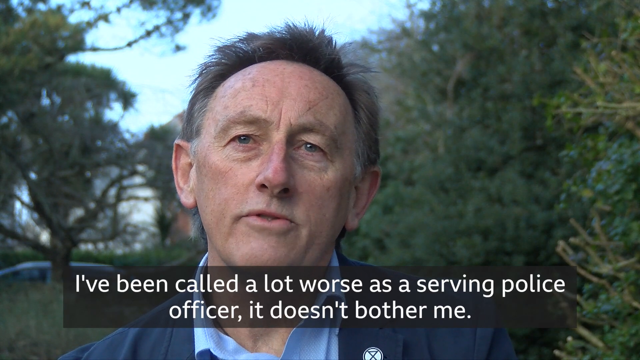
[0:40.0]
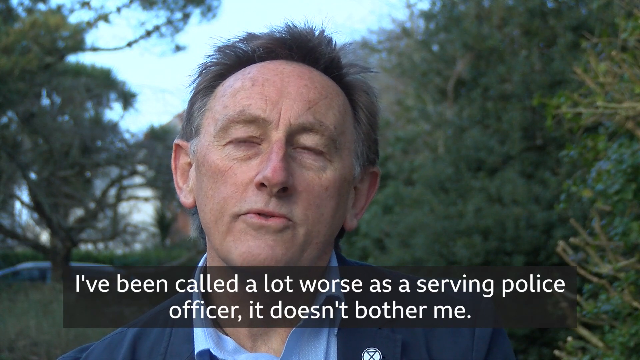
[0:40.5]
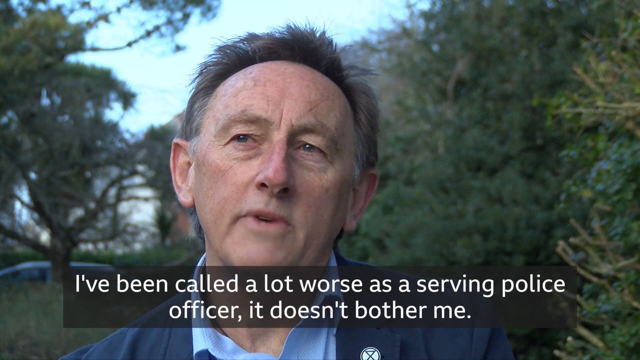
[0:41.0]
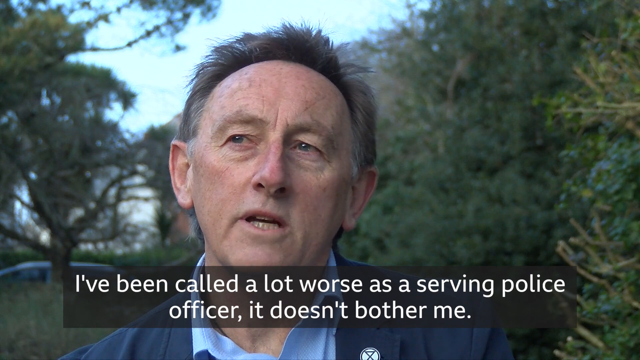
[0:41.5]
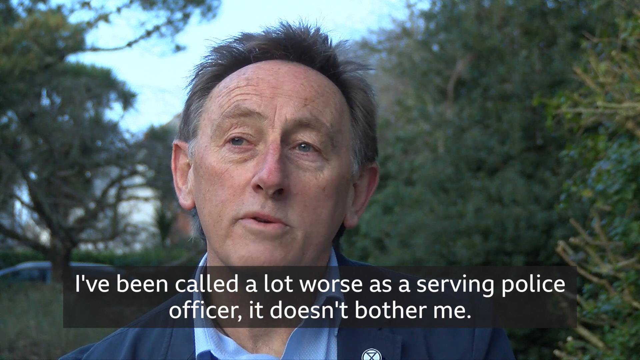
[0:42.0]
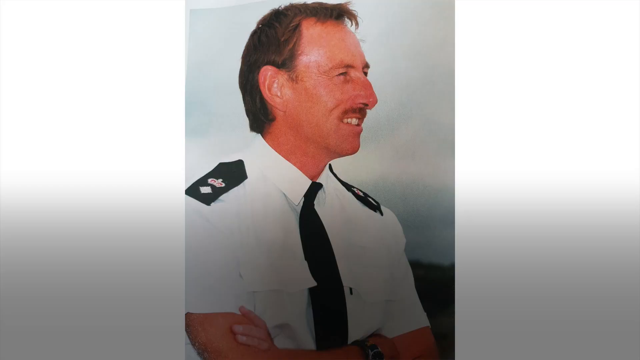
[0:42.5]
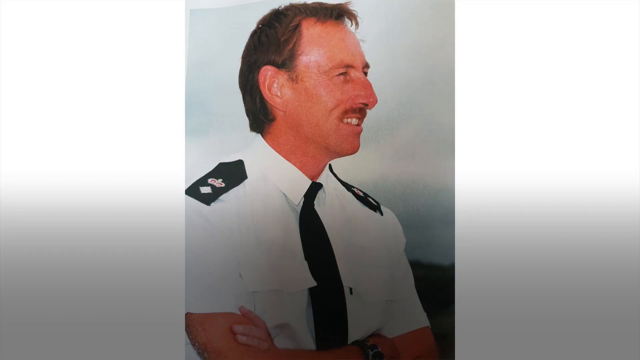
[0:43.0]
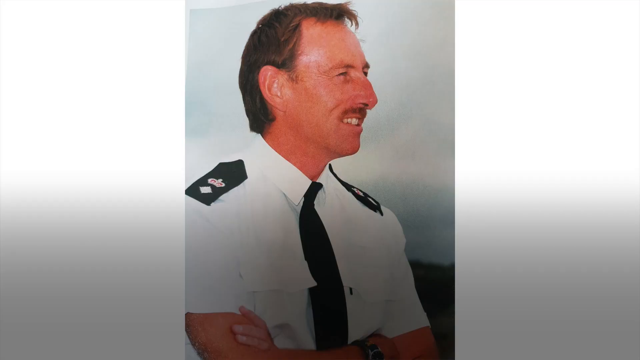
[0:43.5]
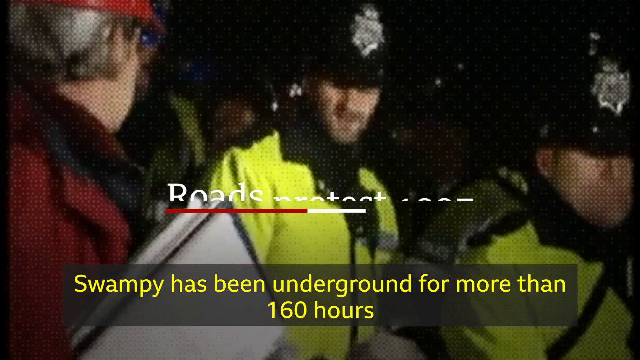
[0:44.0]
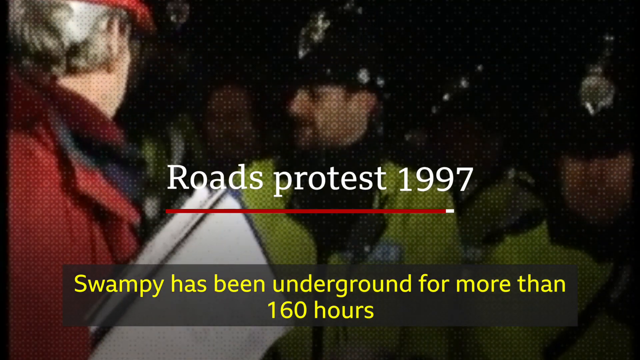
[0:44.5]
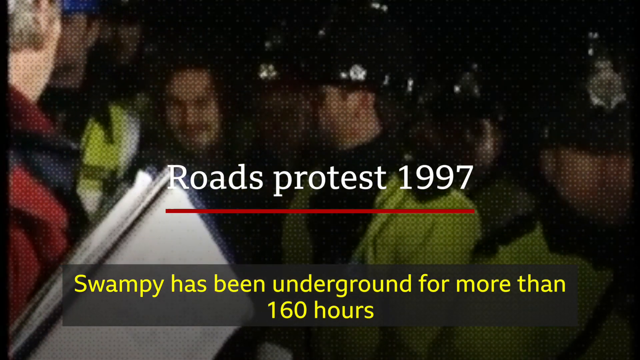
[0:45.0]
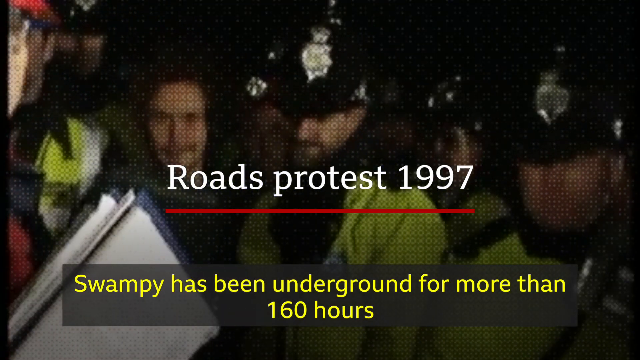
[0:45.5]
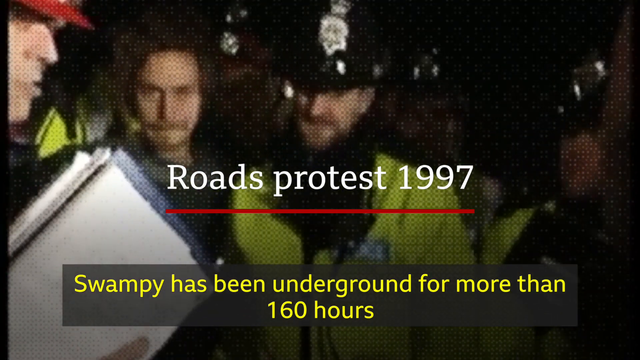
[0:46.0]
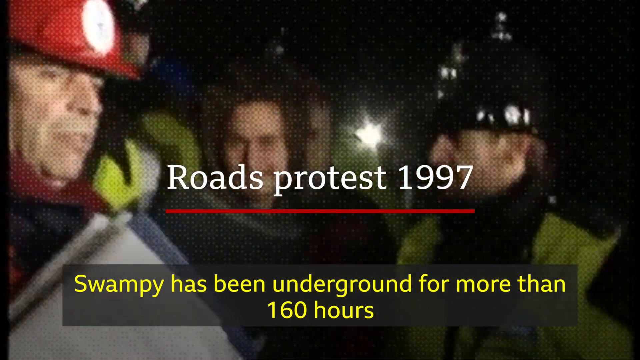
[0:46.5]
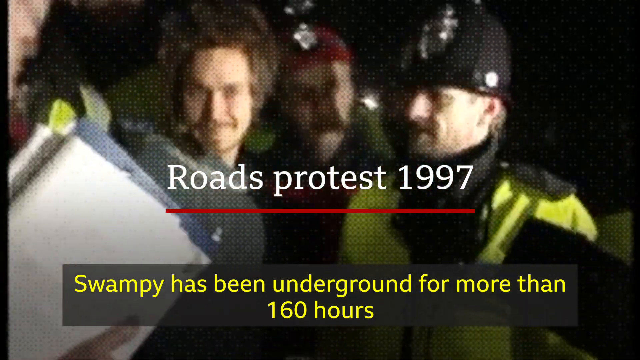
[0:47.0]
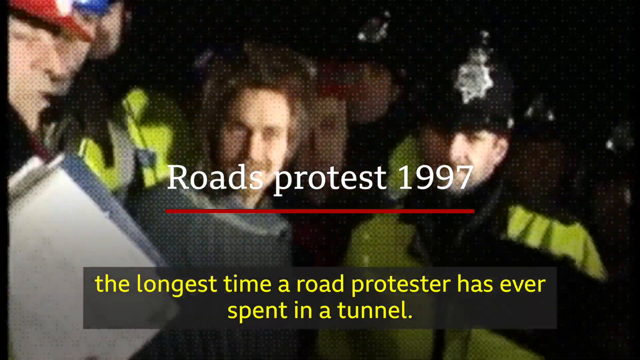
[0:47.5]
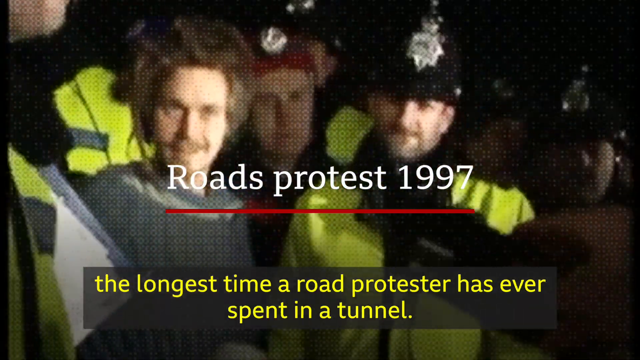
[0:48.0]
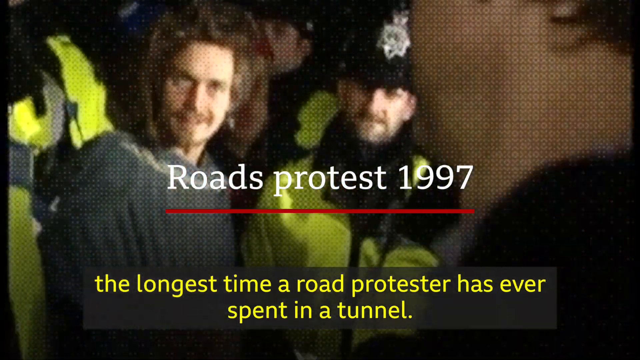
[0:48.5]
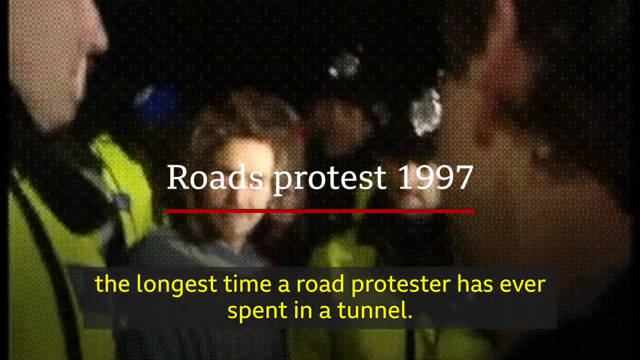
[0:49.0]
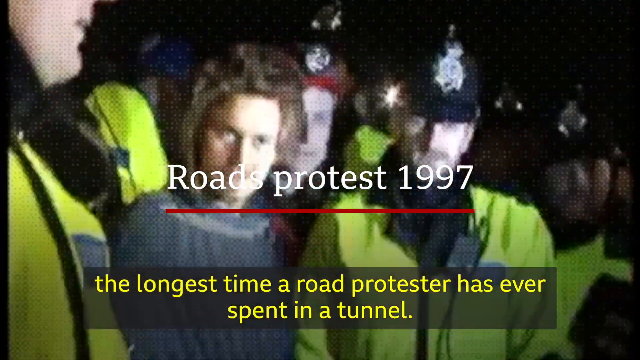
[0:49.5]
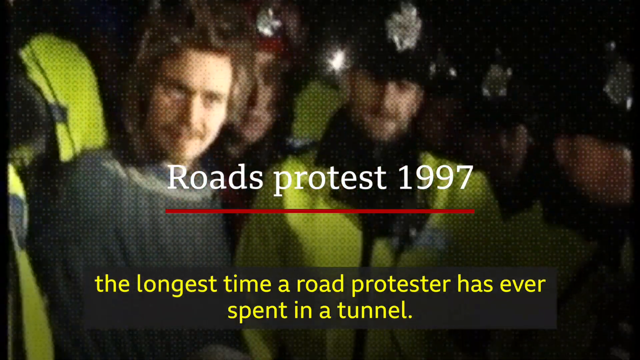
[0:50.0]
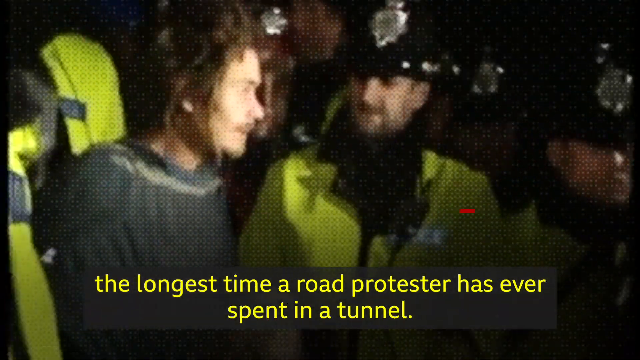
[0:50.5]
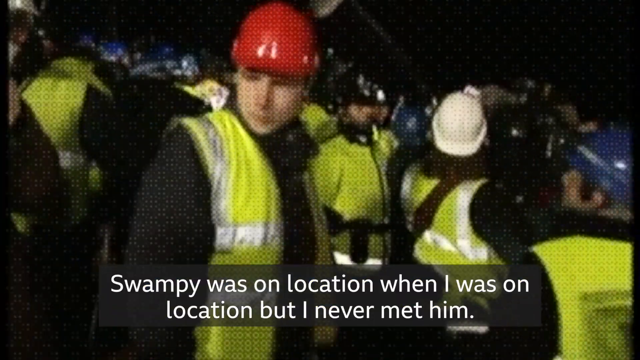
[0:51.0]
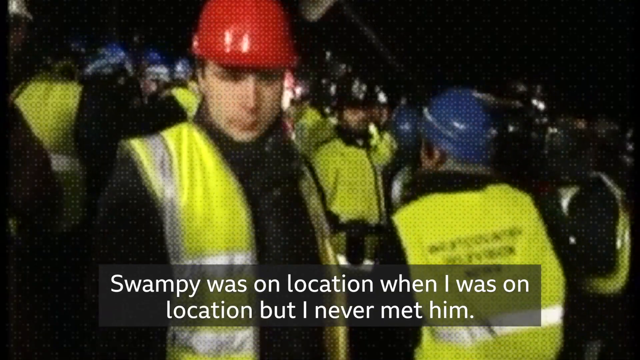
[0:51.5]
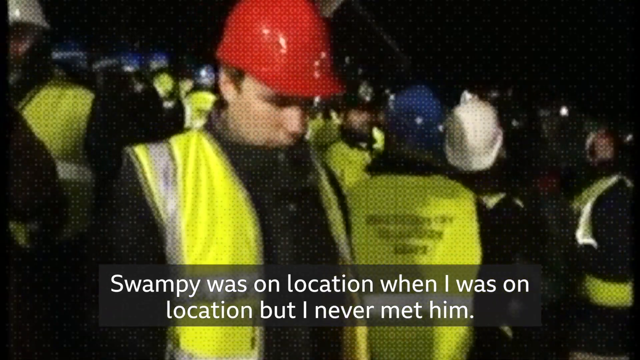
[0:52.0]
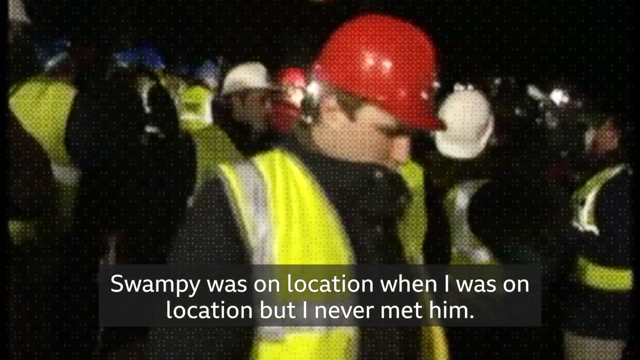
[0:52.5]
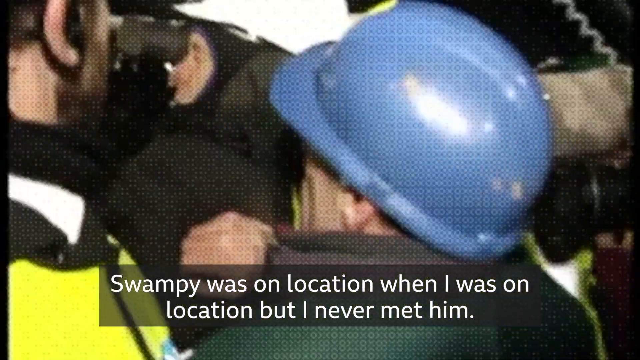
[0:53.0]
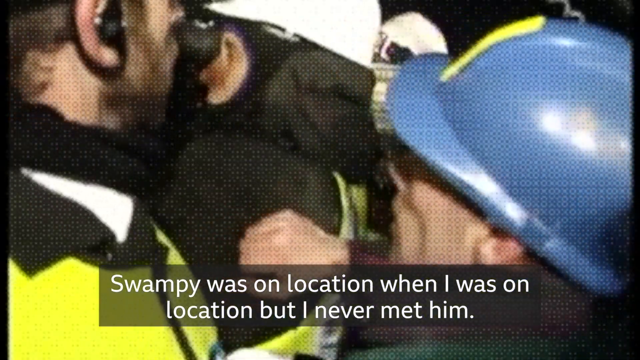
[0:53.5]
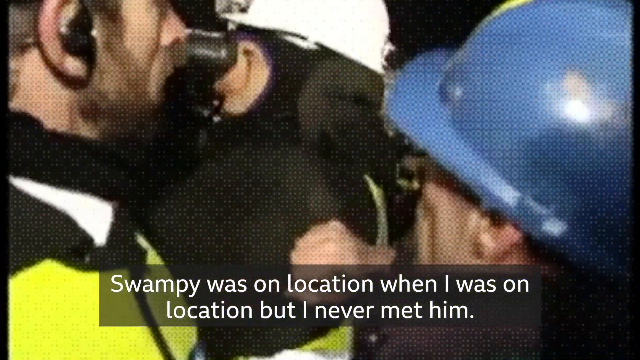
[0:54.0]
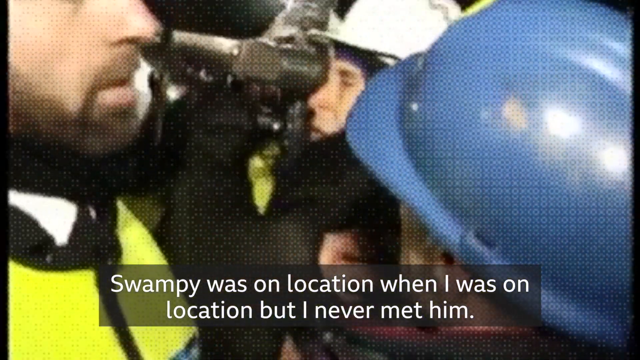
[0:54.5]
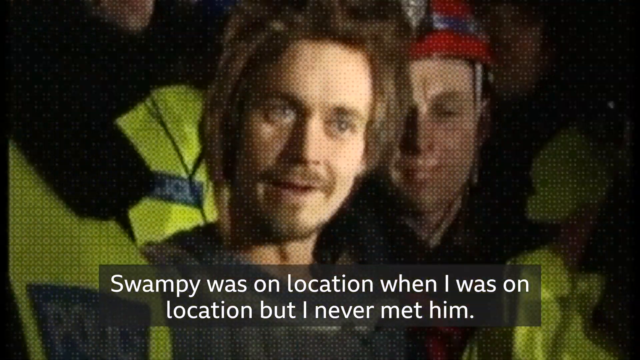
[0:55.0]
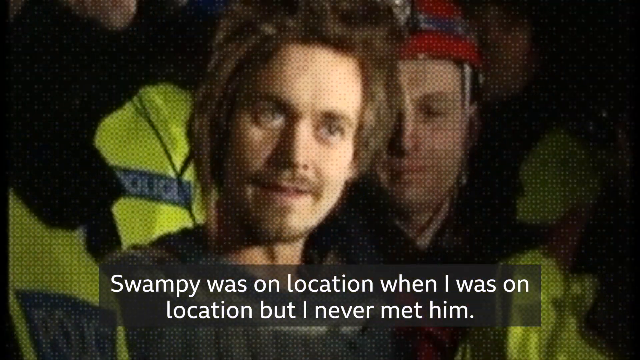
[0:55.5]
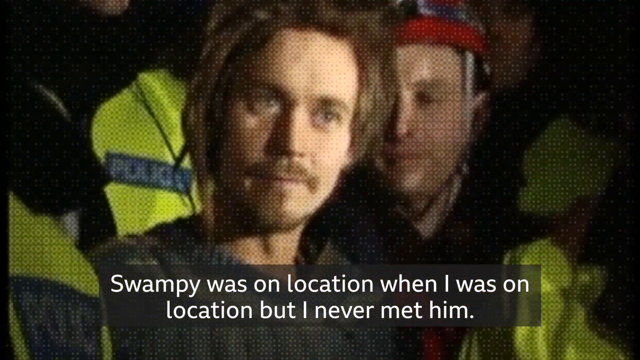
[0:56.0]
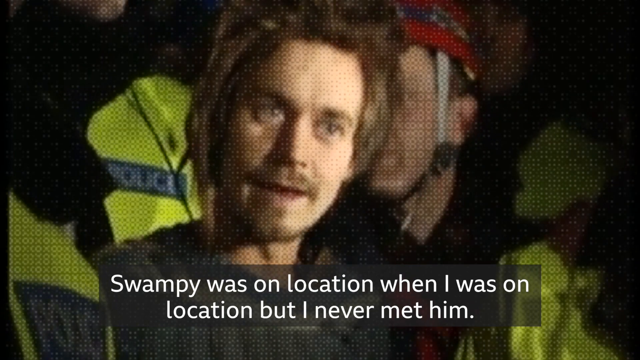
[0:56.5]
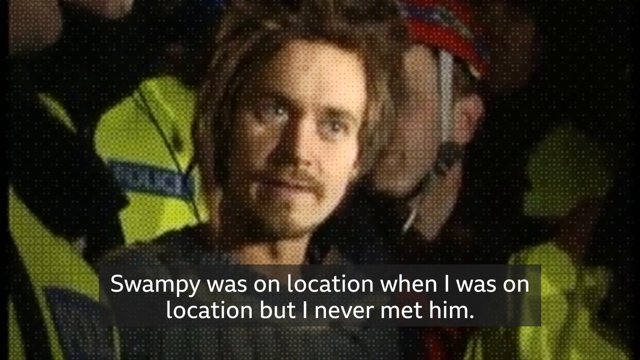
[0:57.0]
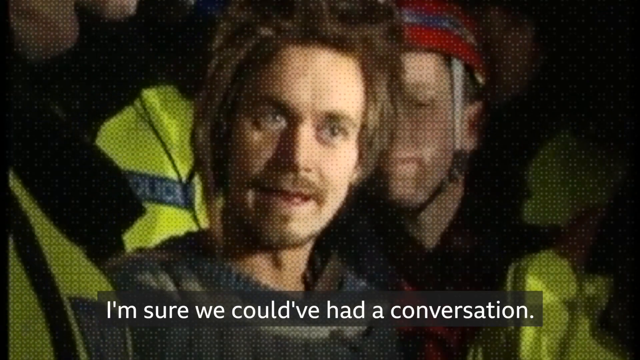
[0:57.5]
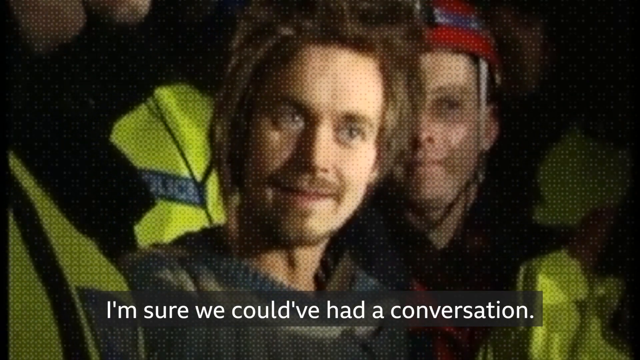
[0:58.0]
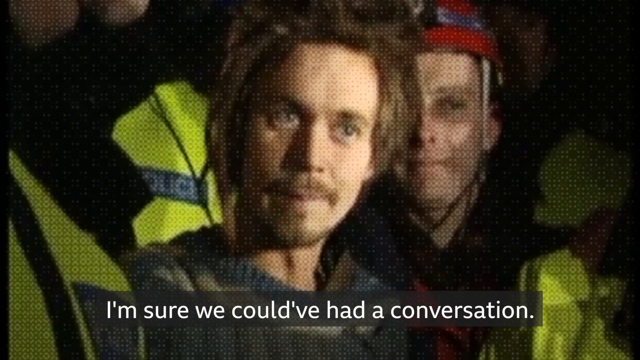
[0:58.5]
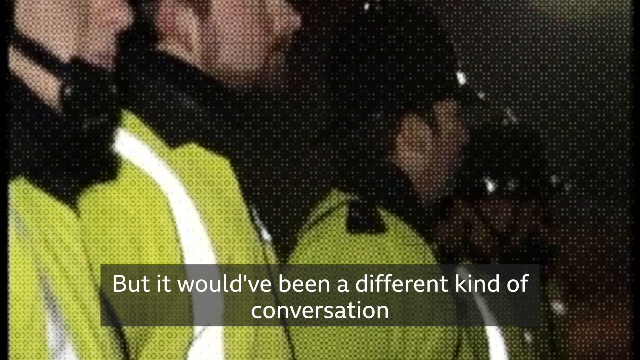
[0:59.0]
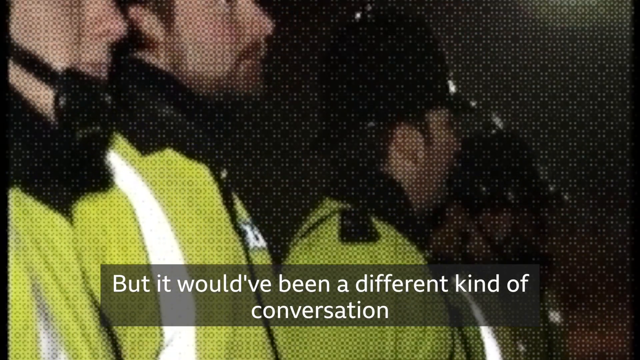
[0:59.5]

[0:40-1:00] The words a man is saying are transcribed in white text at the top of the screen. A man wears a police officer uniform of a white shirt with a black tie and black shoulder attachments. Then footage shows police officers in yellow safety vests at night, with text across the screen reading "Rhodes protest 1997". The police officers stand around wearing helmets of different colors. A man with a mustache and long brown hair speaks, surrounded by police. The narration is transcribed across the bottom of the screen, reading "Swampy has been underground for more than 160 hours. The longest time a road protester has ever spent in a tunnel." and then "Swampy was on location when I was on location, but I never met him. I'm sure we could have had a conversation, but it would have been a different kind of conversation."